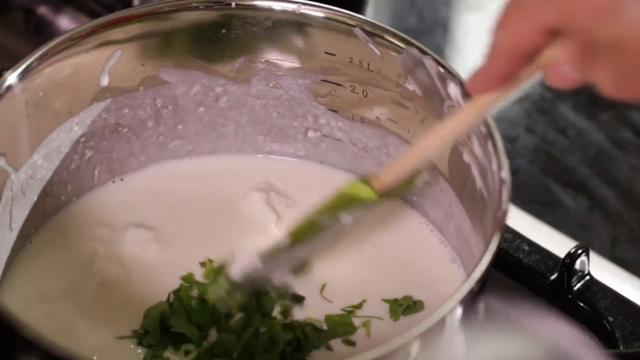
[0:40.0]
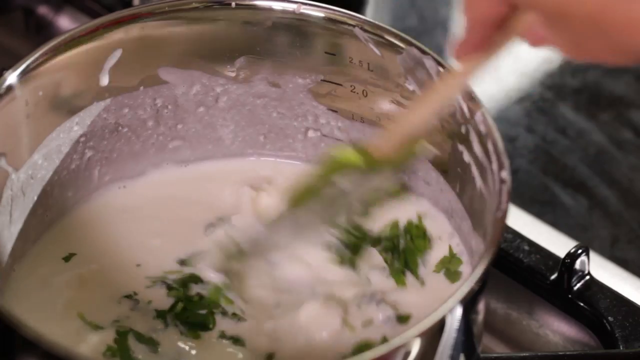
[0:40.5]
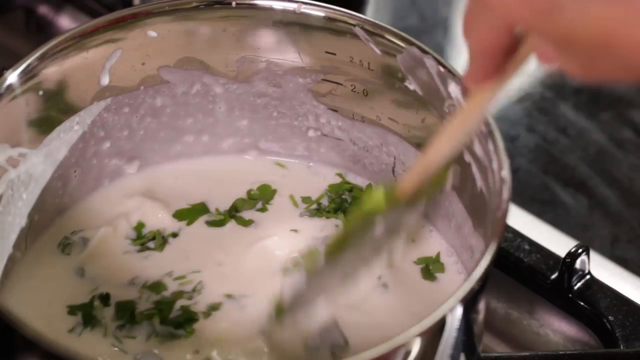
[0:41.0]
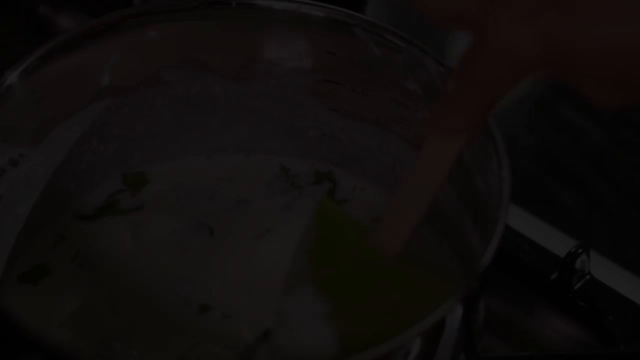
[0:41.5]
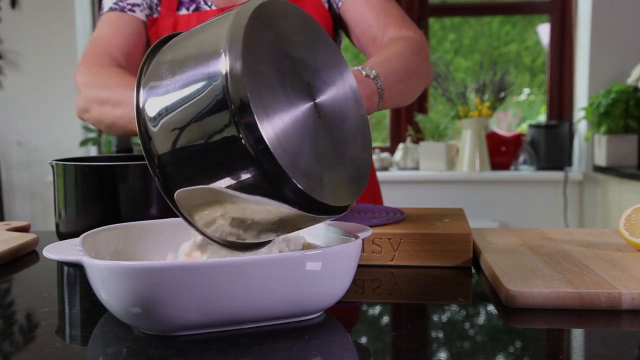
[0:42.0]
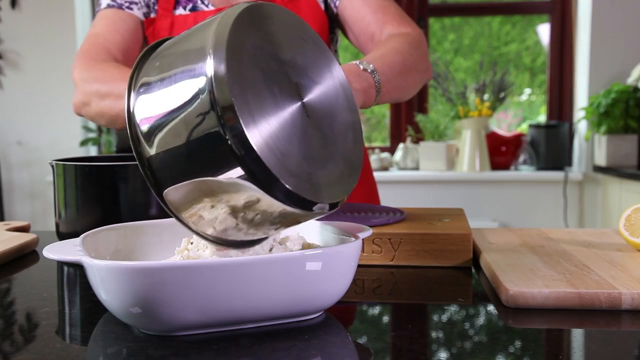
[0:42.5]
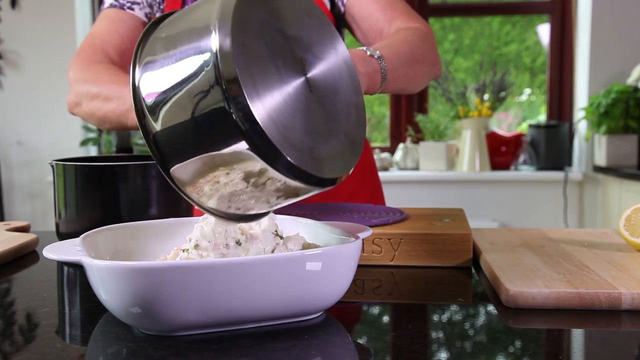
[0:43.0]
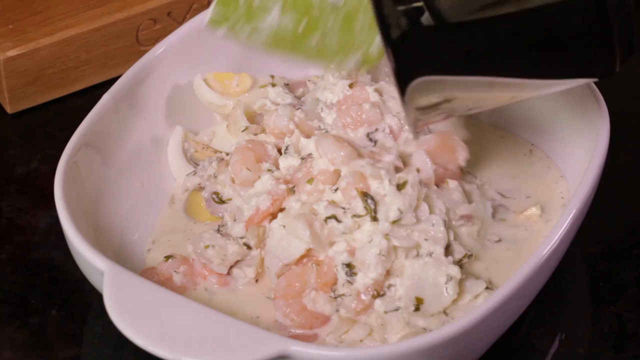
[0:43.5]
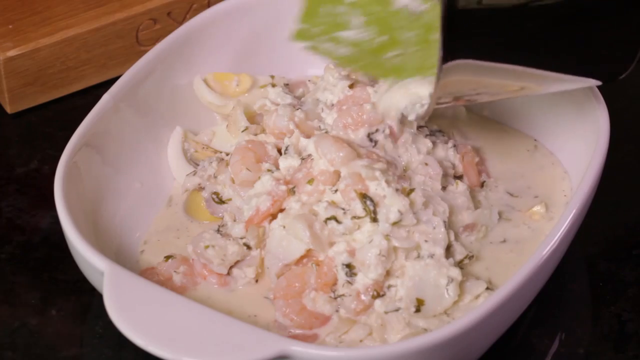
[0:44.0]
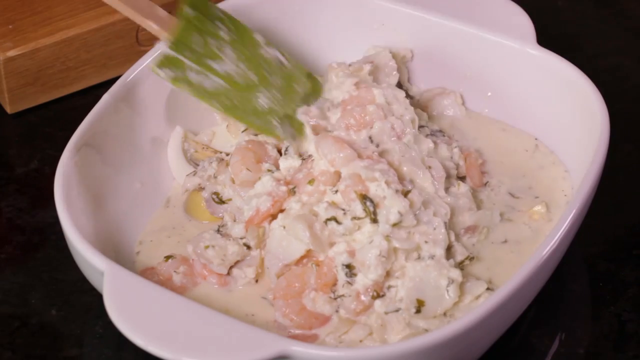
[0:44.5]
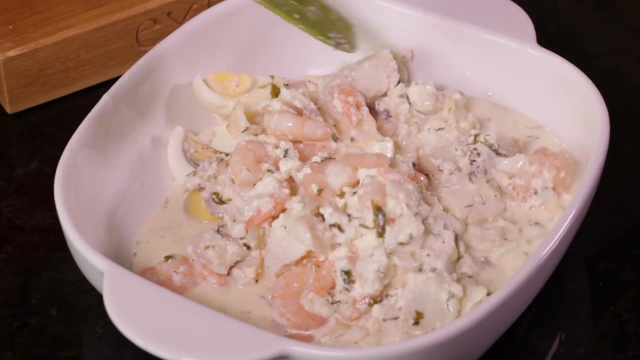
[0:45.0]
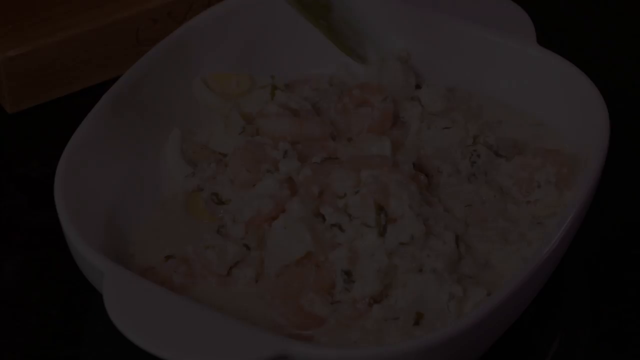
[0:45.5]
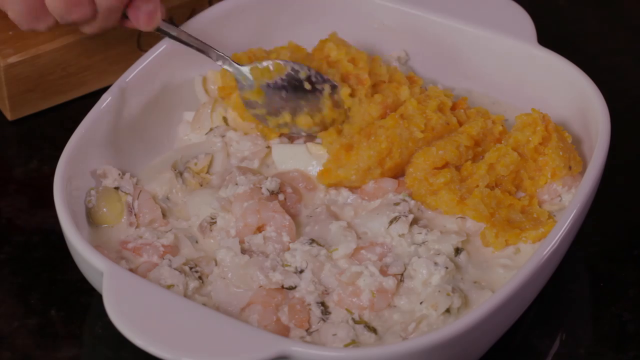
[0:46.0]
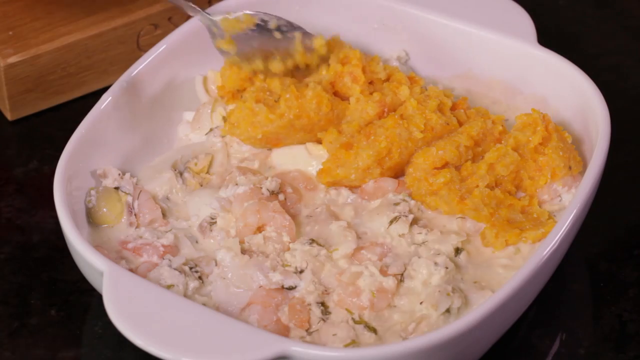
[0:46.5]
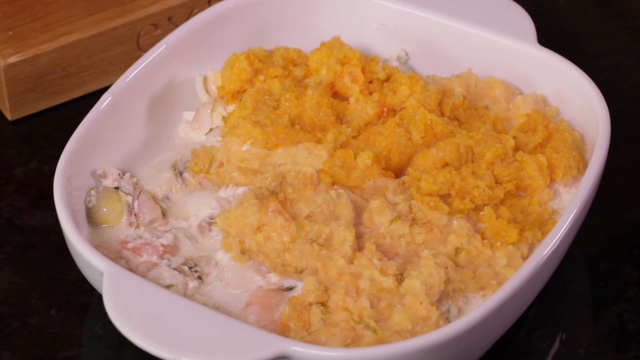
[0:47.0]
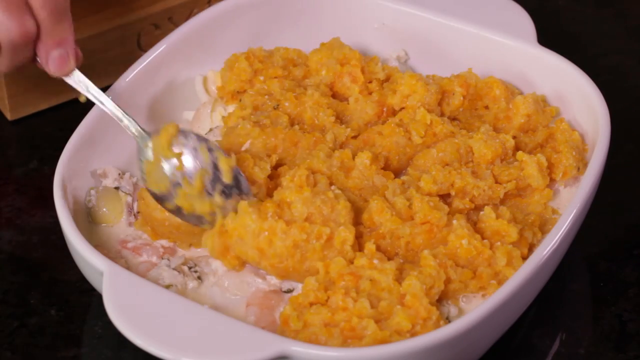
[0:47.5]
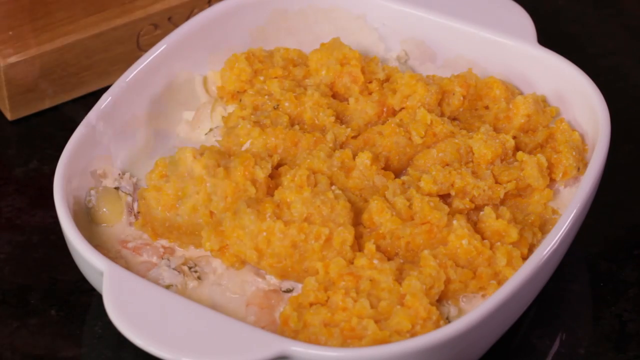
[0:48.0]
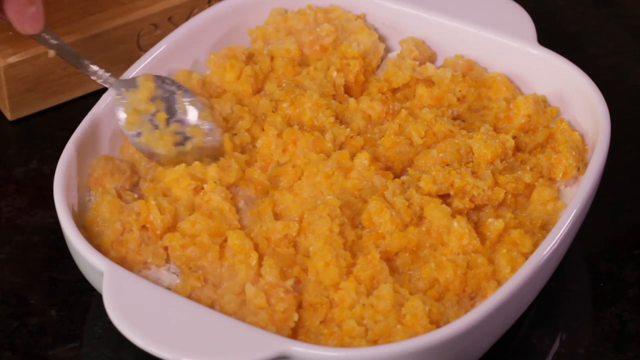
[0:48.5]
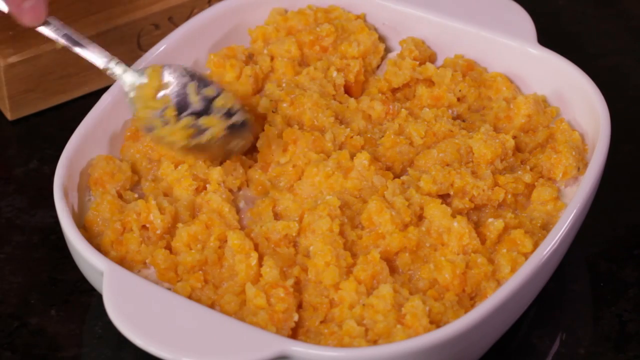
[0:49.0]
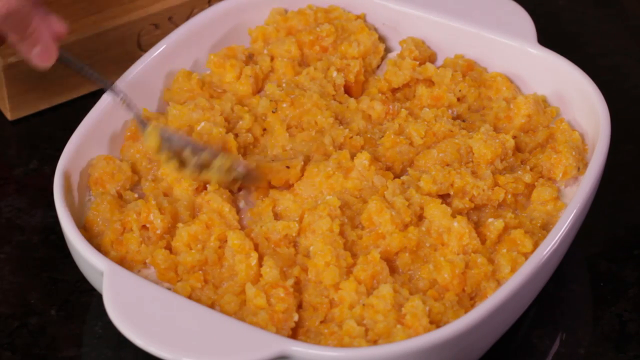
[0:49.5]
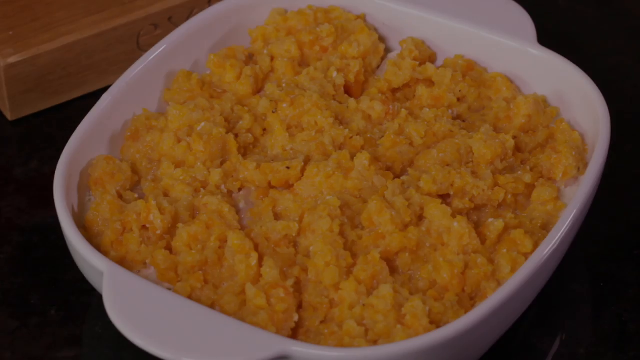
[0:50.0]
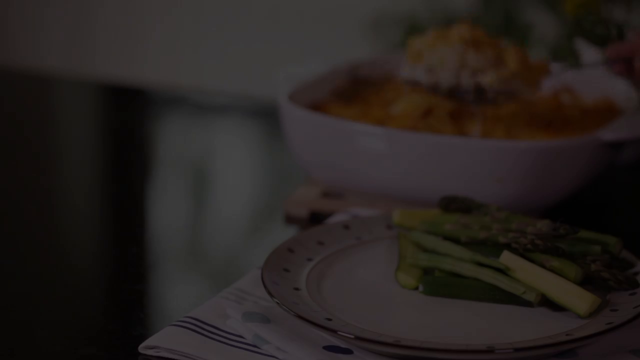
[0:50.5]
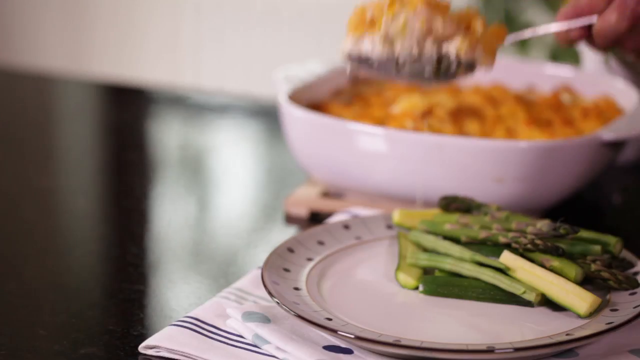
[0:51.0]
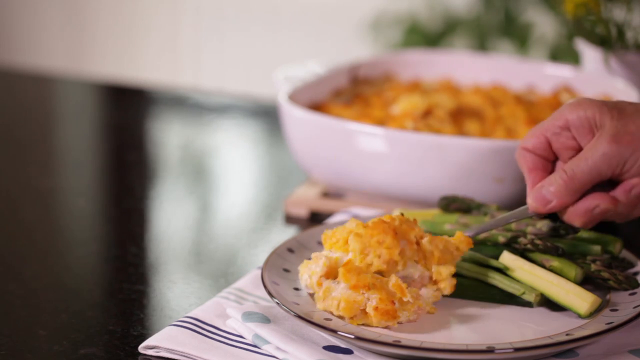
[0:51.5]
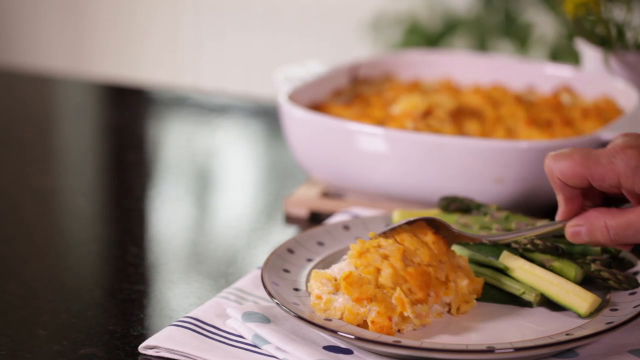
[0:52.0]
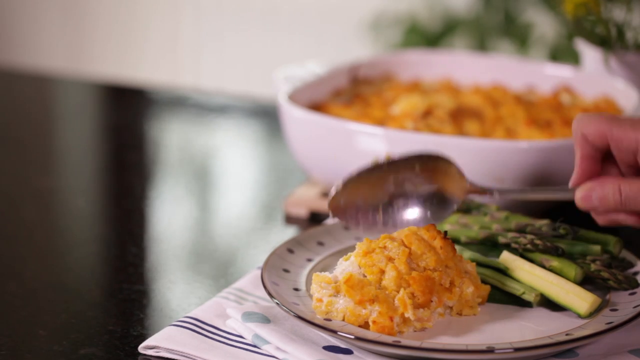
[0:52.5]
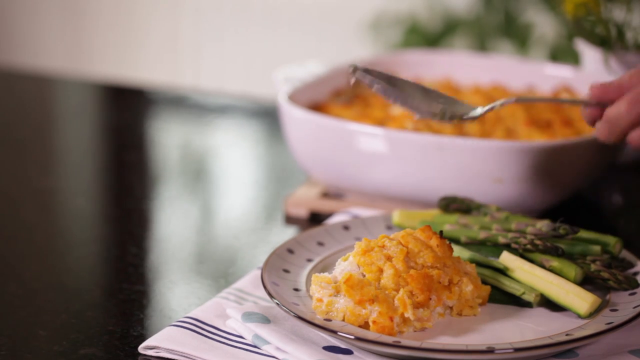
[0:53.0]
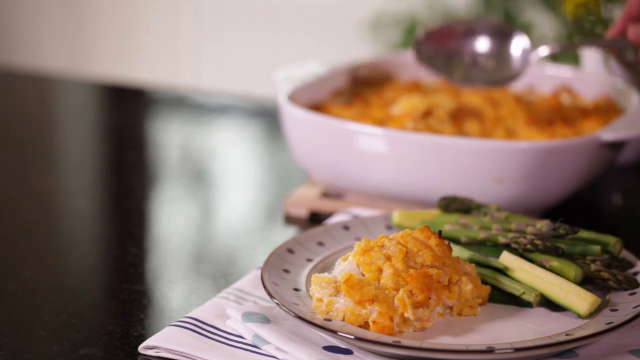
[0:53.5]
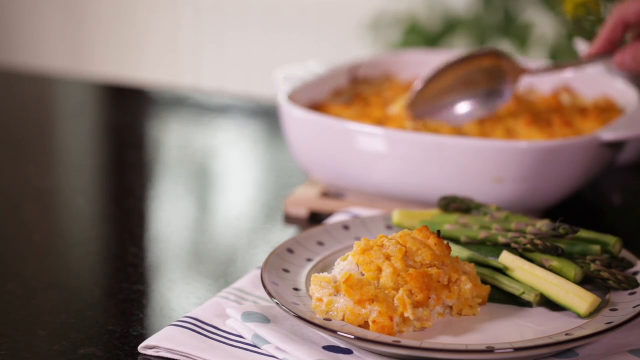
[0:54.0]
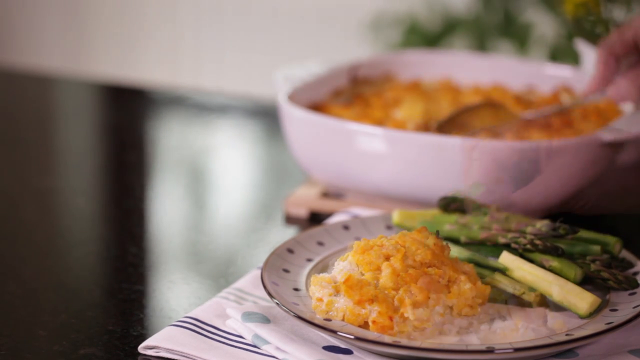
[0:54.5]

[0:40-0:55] Transitioning cuts show various points in the preparation of a meal. On a stovetop is what appears to be a heavy stainless steel pot, and a person mixes together heavy cream and green parsley leaves in a bowl. The mixture is swished around, and later its contents are emptied into a large white casserole dish. As it is emptied out, the cream is visible along with bits that appear to be egg, with a white outer portion and a thicker yellow center. There is also some pink coloring of what appears to be fish or shrimp inside the meal, all mixed in a very creamy mixture that looks almost gelatinous in the way it moves around in the bowl. Scooped onto the top is an orange topping with a mashed potato consistency, possibly yams or sweet potatoes, placed over the entire dish. The next scene shows a scoop being taken out of the casserole dish and laid onto a plate next to some green vegetables.